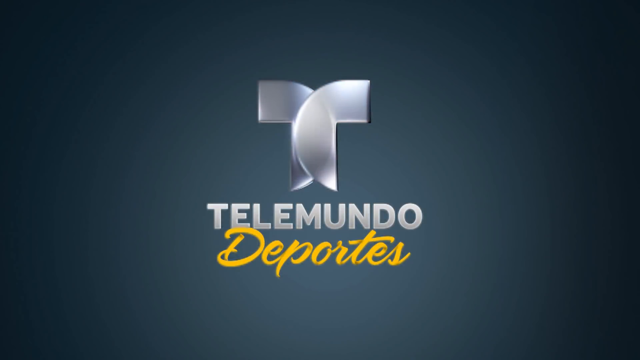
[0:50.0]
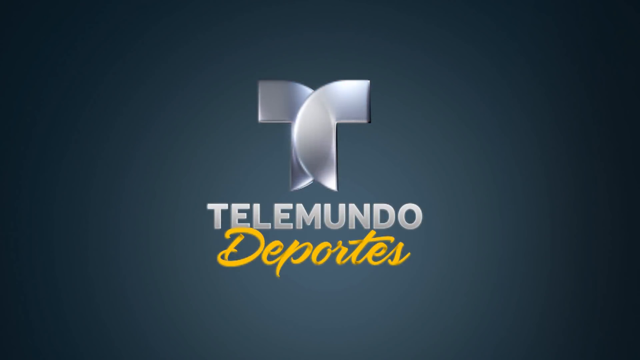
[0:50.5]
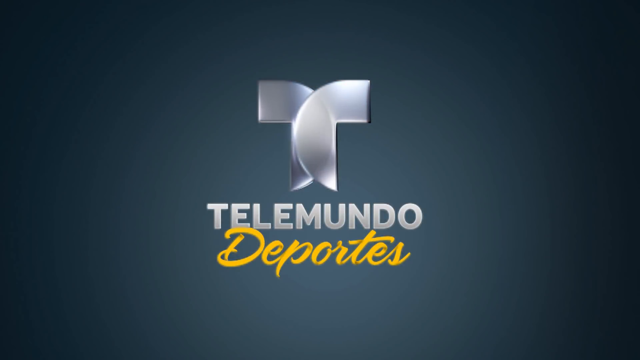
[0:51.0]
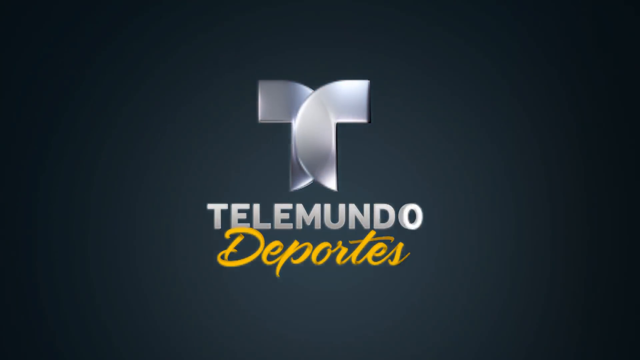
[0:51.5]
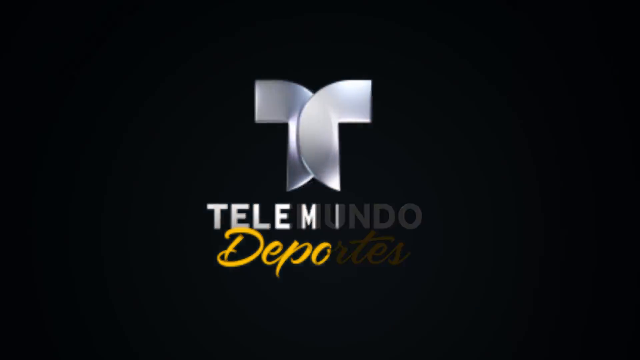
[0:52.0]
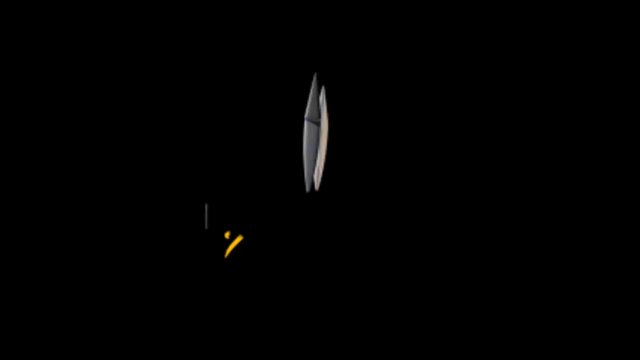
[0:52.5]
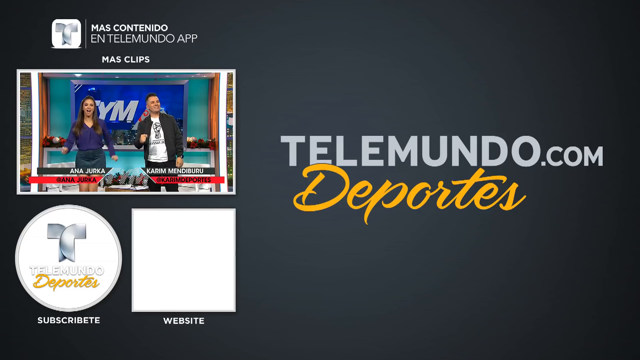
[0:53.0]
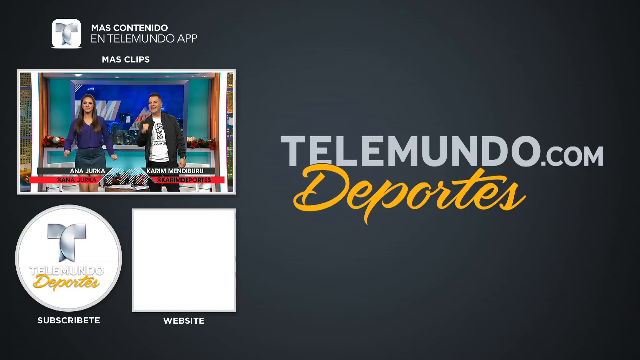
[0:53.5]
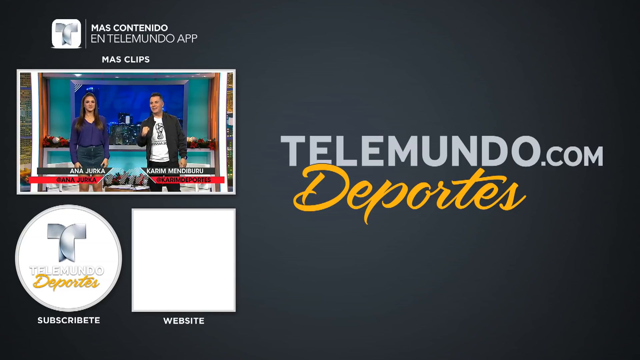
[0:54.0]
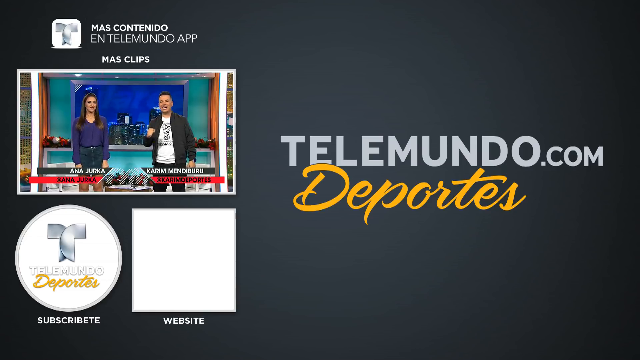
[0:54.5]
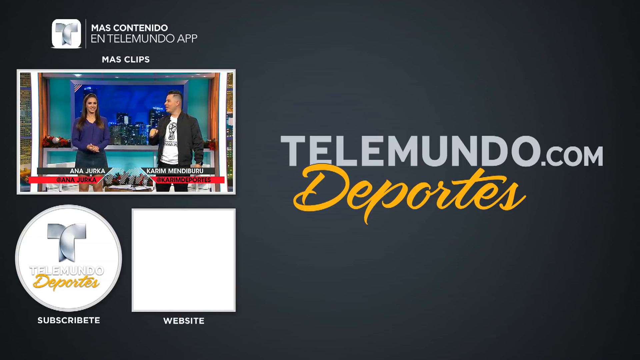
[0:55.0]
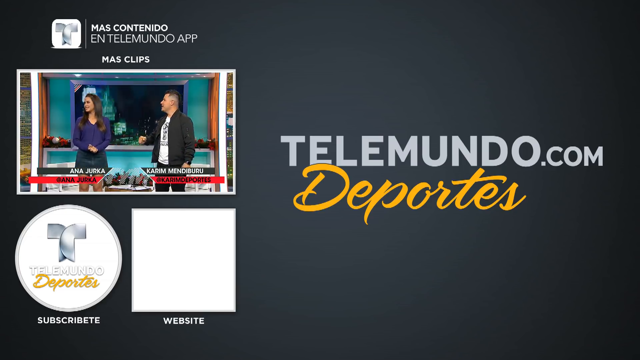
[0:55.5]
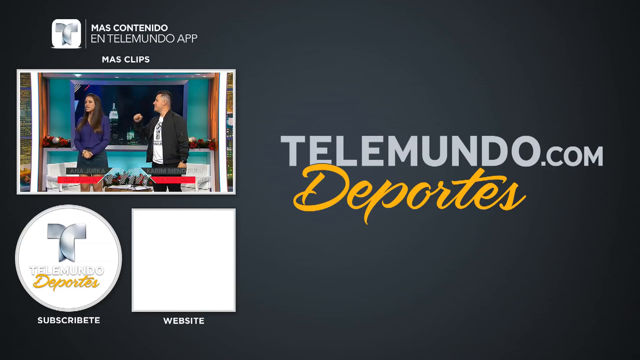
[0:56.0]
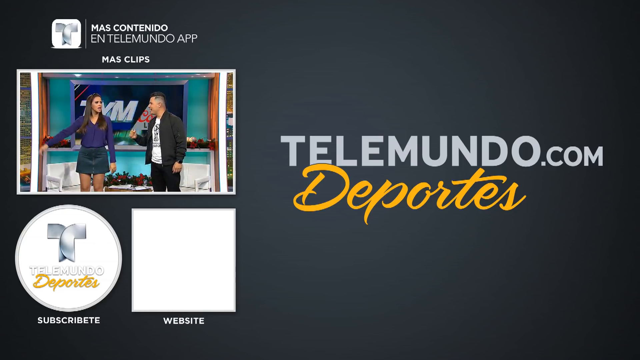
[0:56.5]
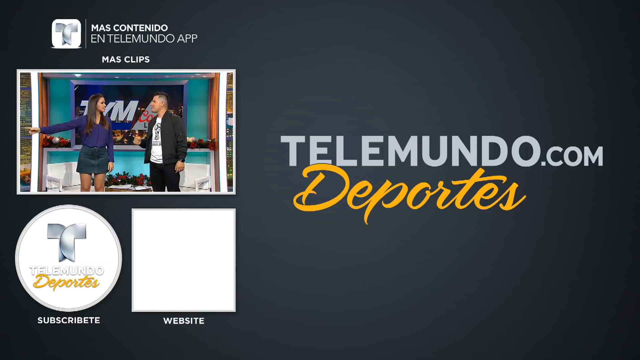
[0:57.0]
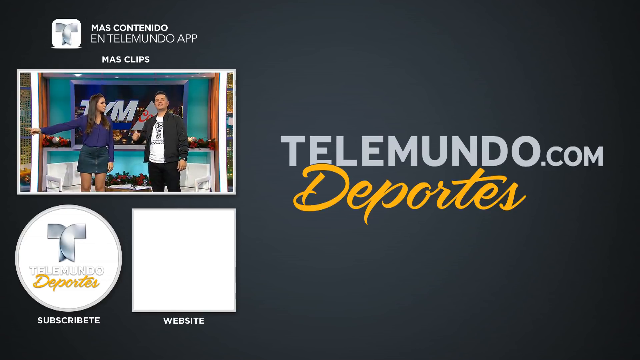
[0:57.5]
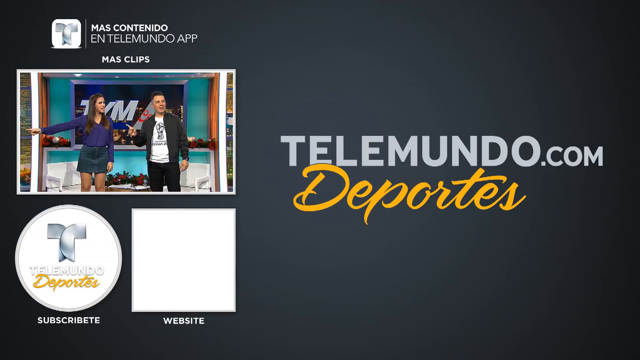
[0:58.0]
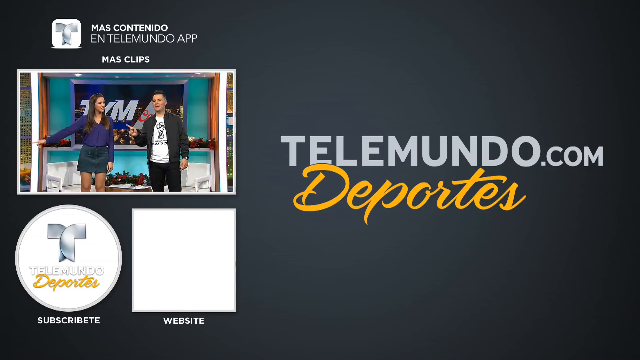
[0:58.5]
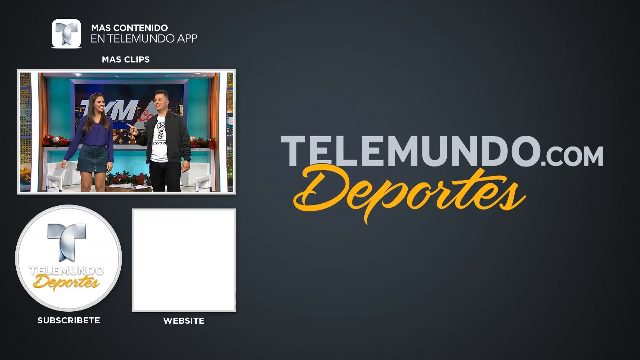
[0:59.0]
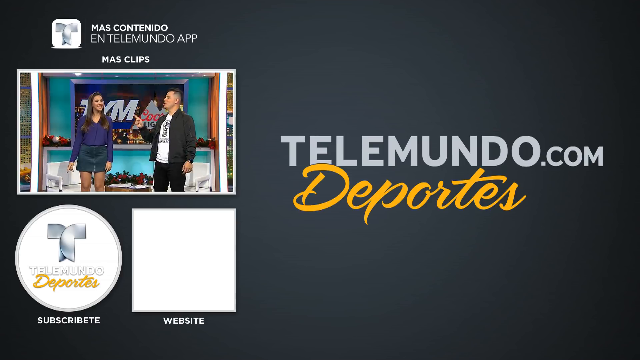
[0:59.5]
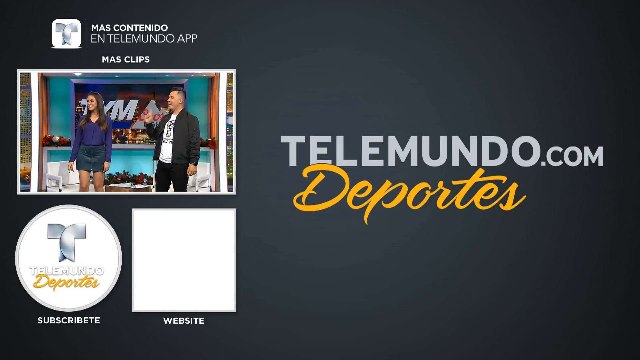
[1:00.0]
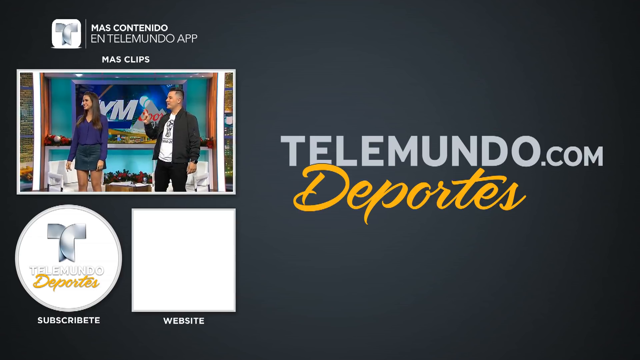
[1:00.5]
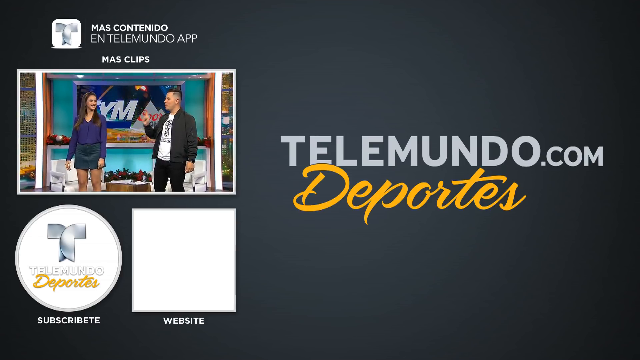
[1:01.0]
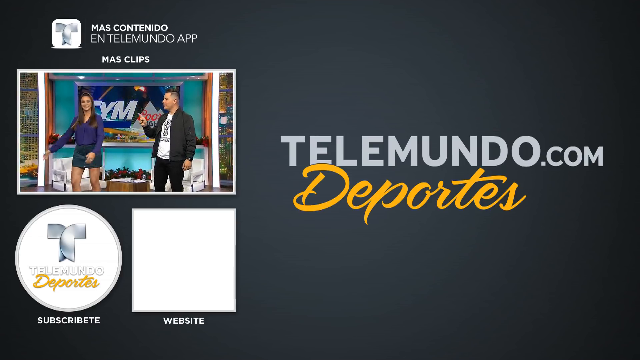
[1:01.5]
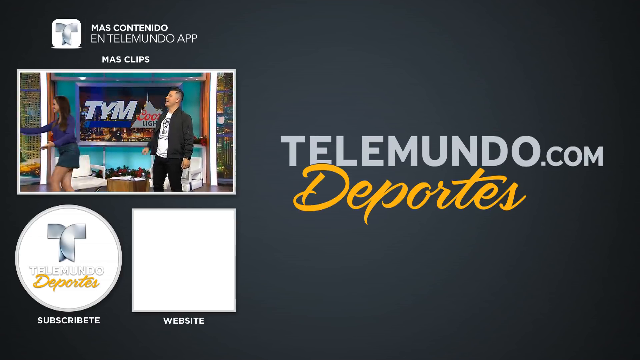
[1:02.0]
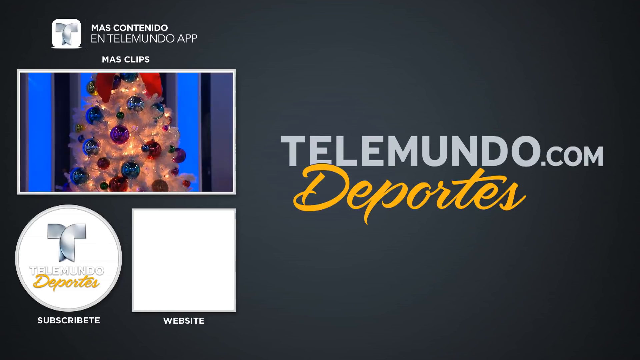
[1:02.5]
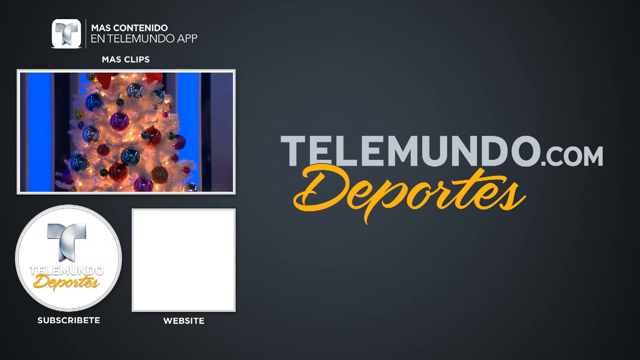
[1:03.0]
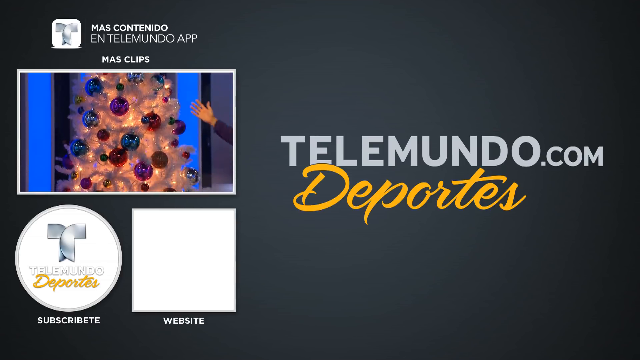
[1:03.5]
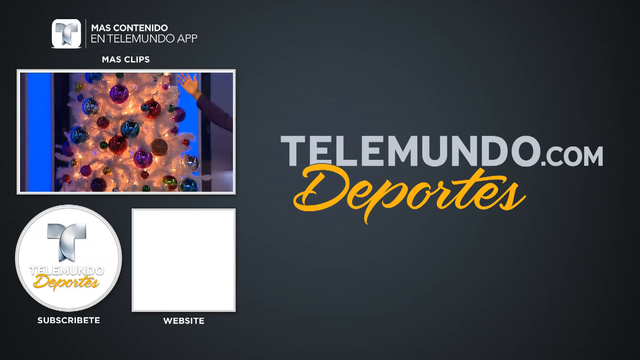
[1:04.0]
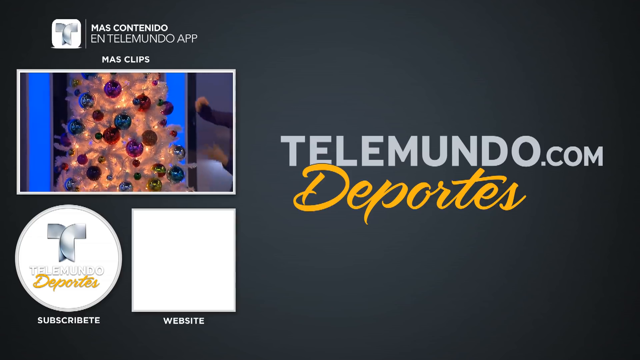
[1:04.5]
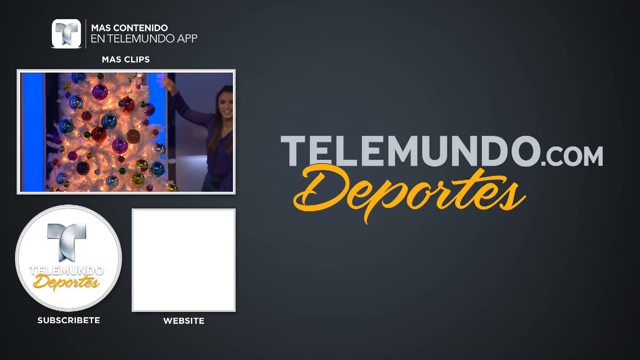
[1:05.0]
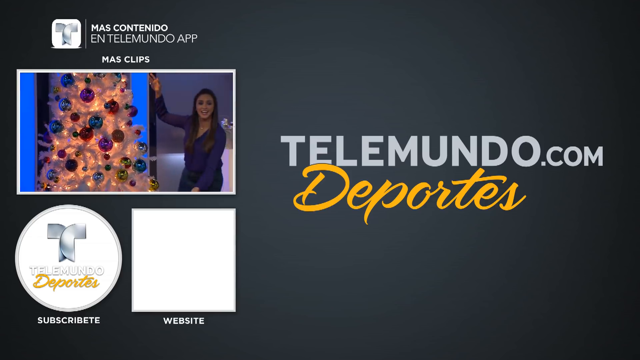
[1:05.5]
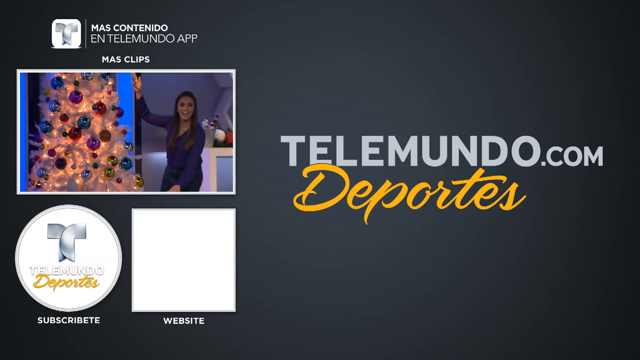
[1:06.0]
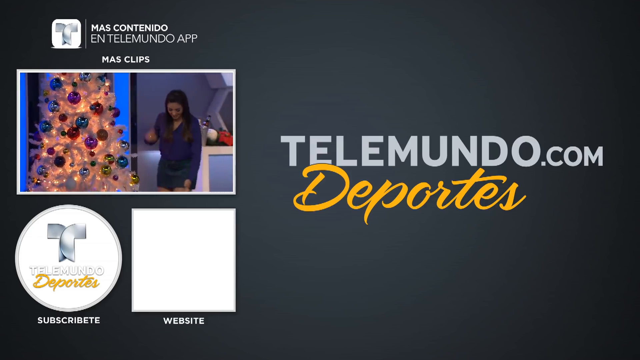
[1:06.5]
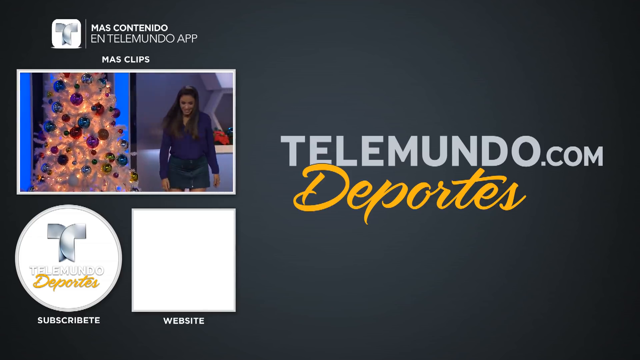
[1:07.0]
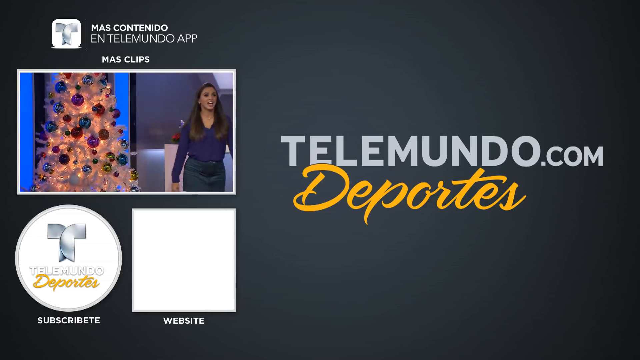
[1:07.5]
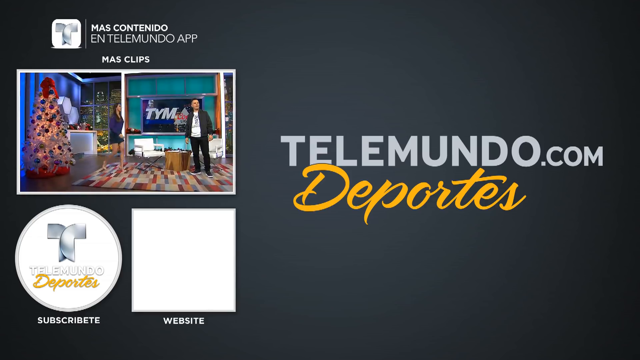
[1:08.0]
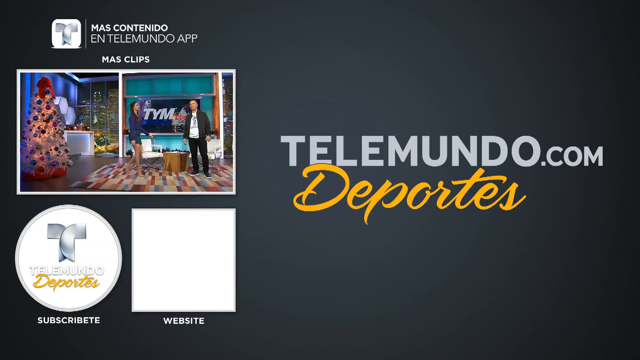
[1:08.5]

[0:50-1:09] The main part of the video ends and an end screen appears showing "Telemundo.com Deportes" and a short clip of apparently another video to watch next. At the top right it says "Deporte Rosa" and "721 videos", like a playlist. Two different Telemundo Deportes logos show where to subscribe. The background is basically black and gray.